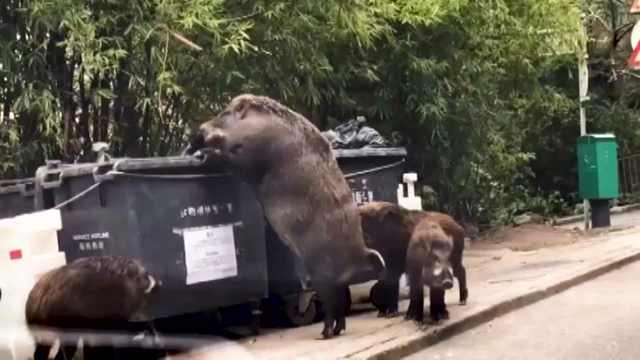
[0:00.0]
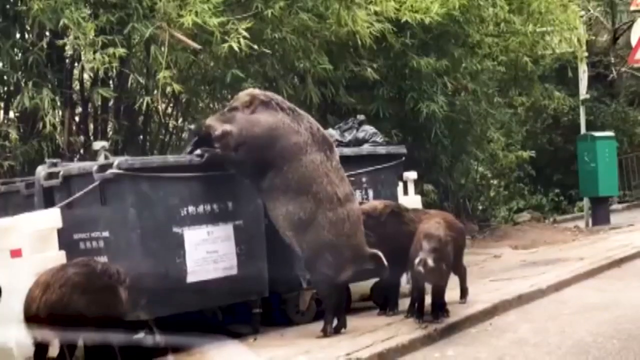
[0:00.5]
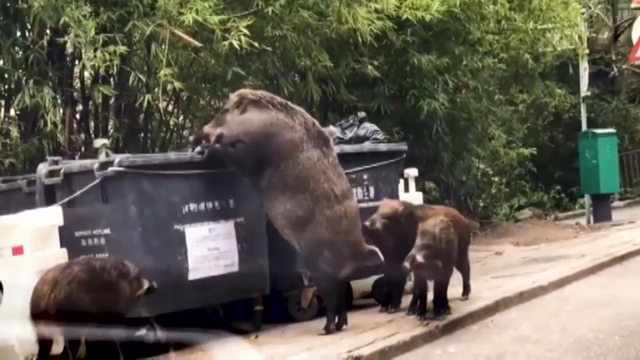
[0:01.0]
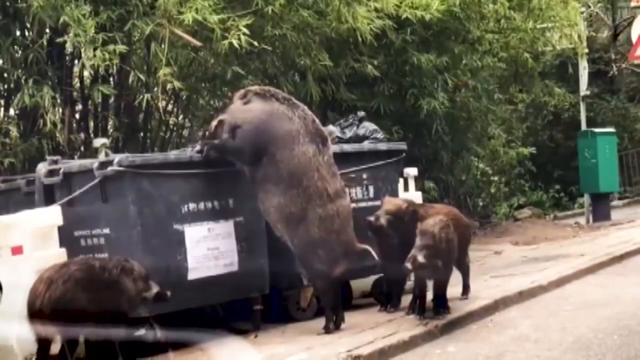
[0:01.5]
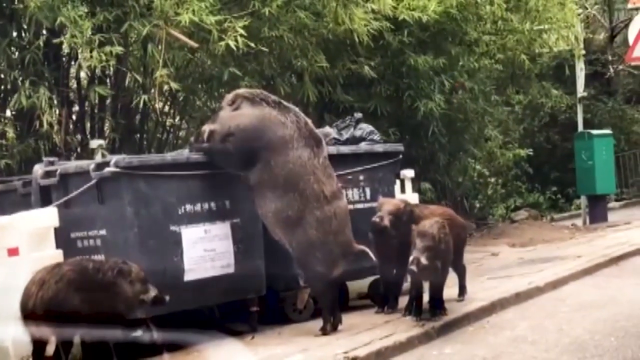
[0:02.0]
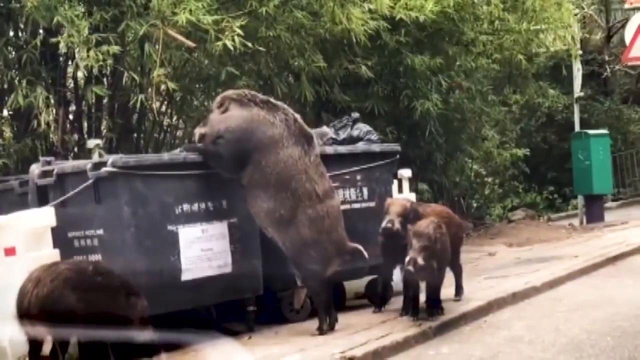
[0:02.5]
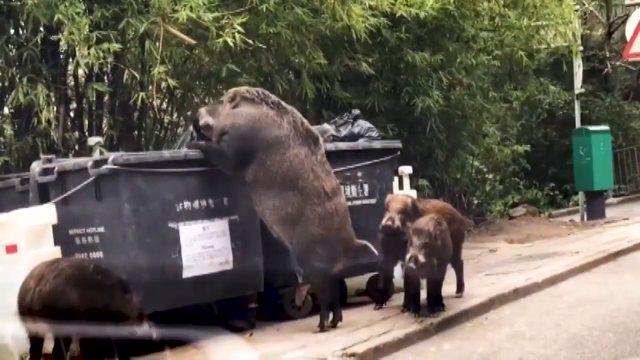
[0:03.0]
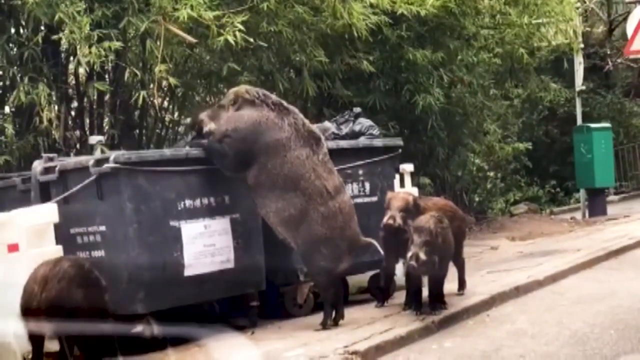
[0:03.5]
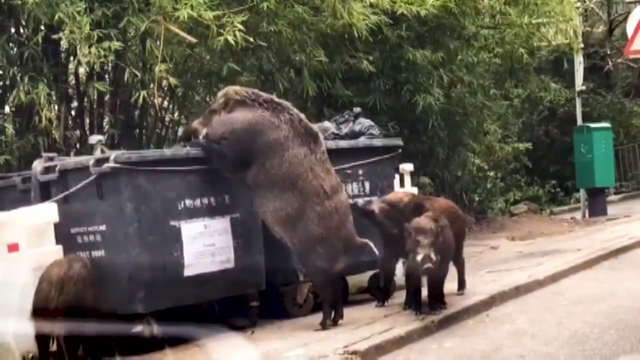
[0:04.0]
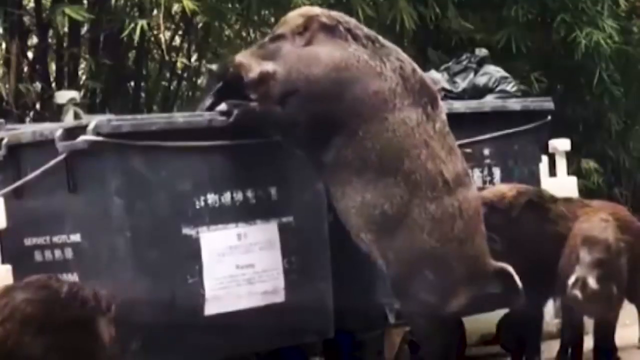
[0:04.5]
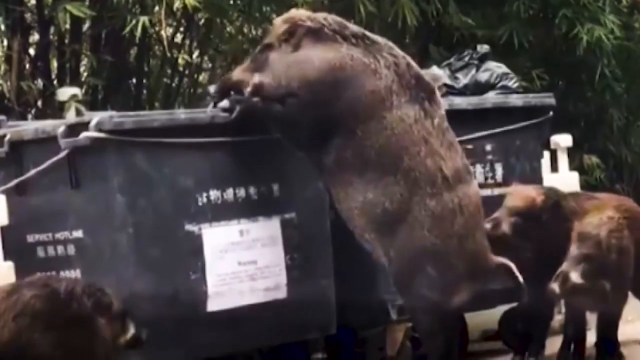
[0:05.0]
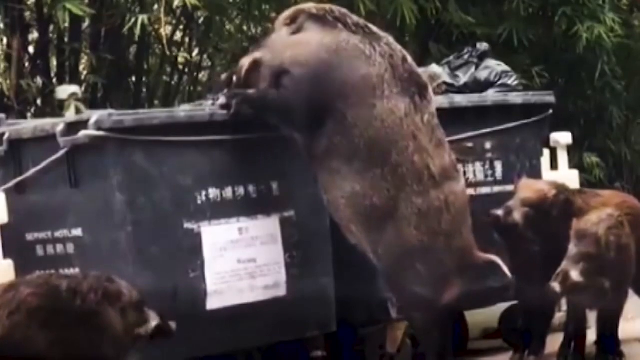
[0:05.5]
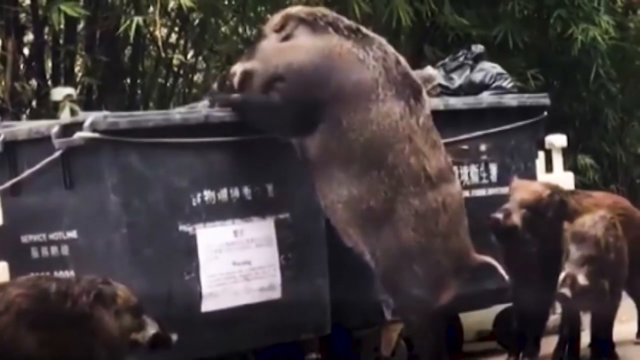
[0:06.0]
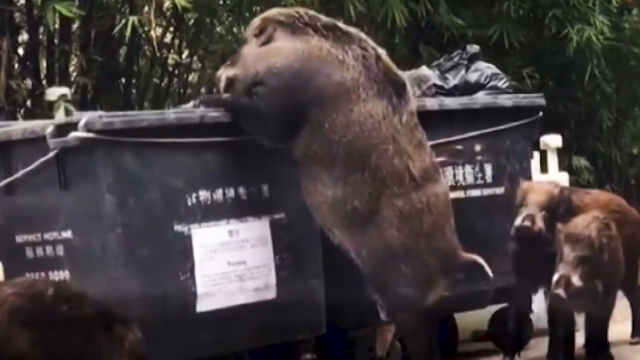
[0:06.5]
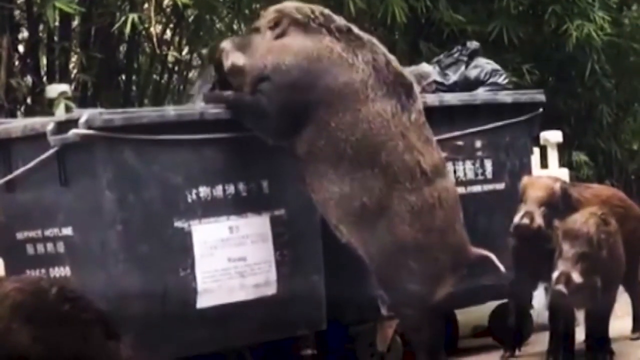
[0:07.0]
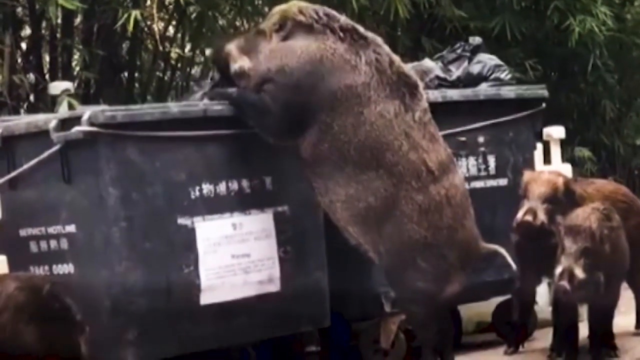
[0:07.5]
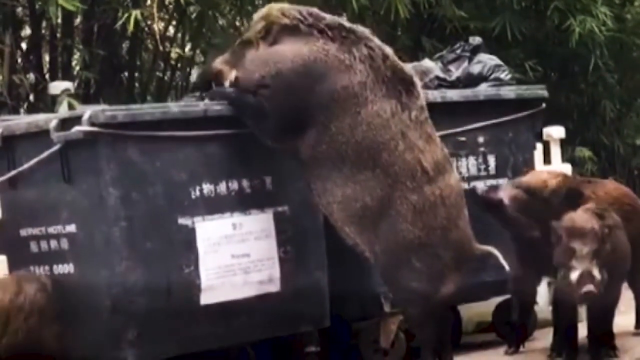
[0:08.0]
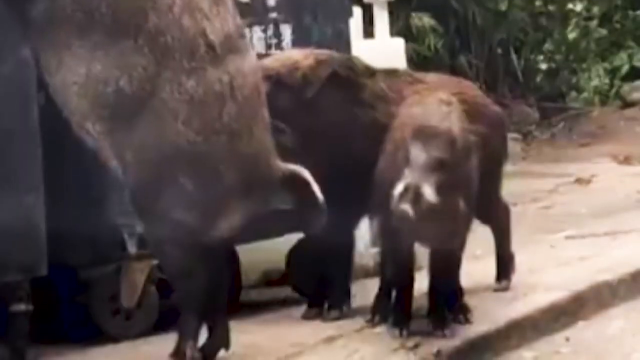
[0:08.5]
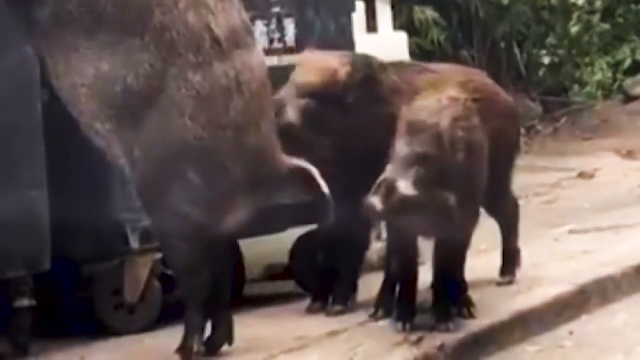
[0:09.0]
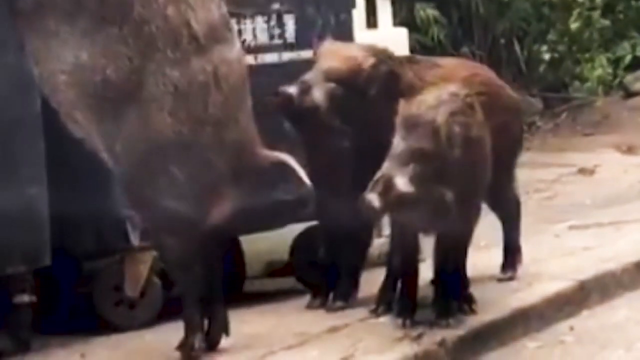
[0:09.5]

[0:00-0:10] Four animals are at two big dustbins, apparently looking for something. They are collecting things from the dustbins: one of them is collecting something, while the other three wait down below, watching. Behind them is green vegetation, and something green is also visible on the left and right sides. One animal is on a black dustbin trying to collect something, trying to open something inside a paper.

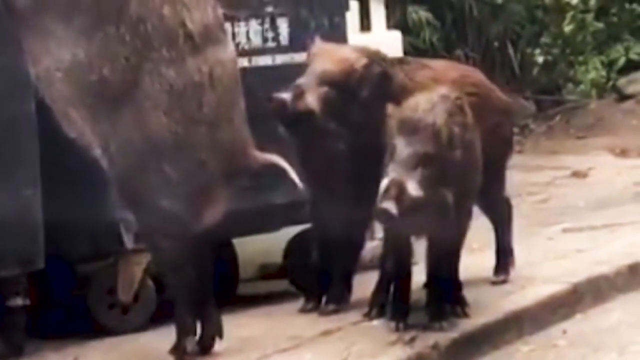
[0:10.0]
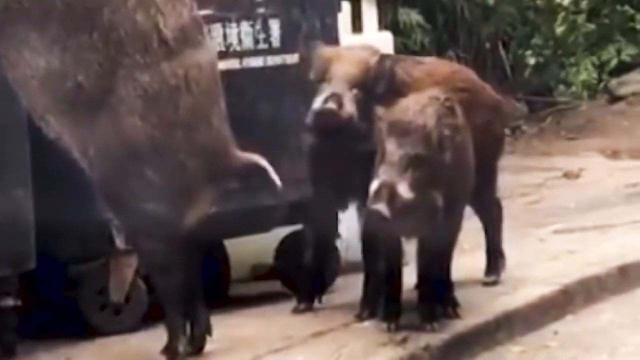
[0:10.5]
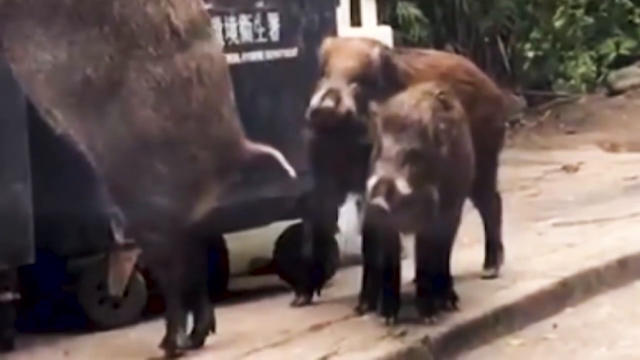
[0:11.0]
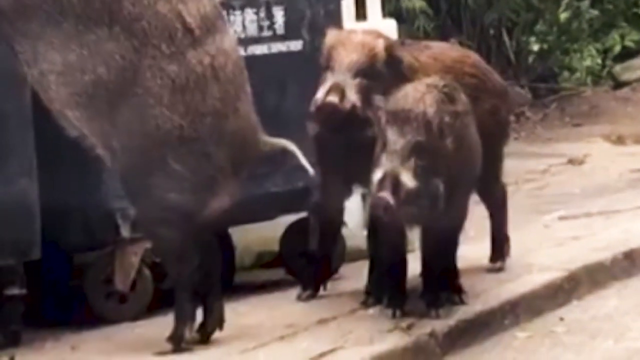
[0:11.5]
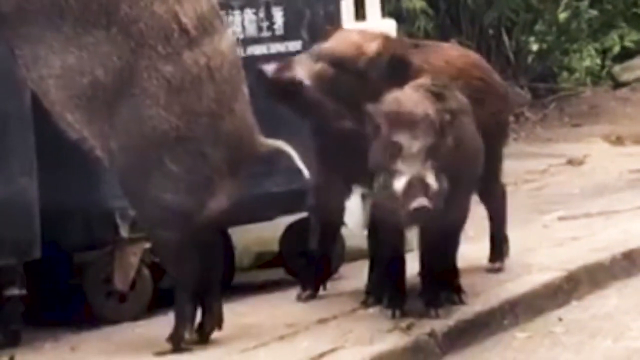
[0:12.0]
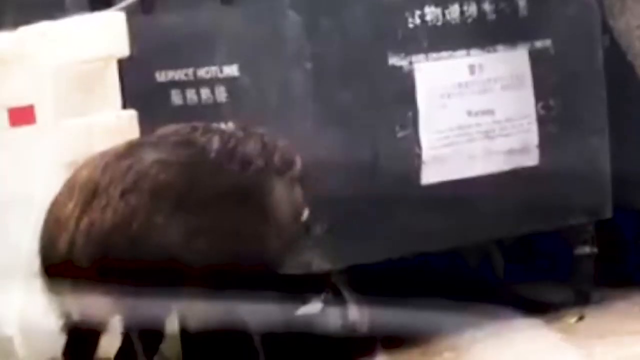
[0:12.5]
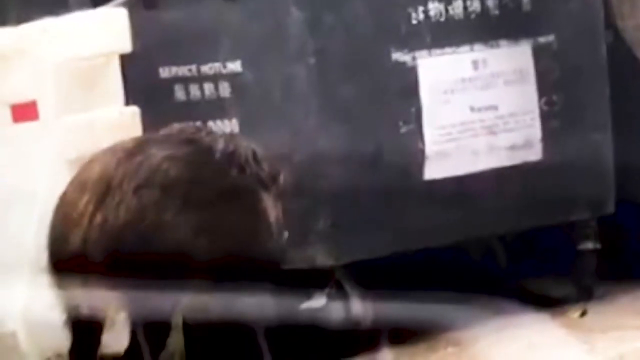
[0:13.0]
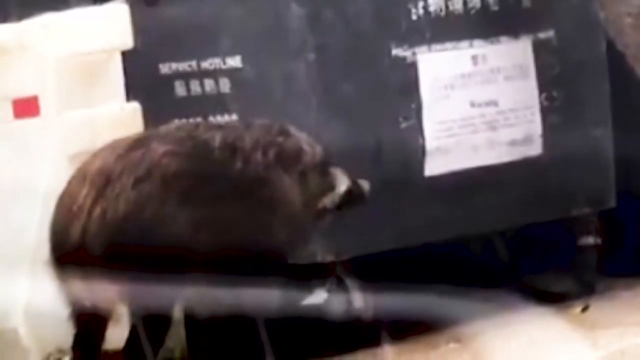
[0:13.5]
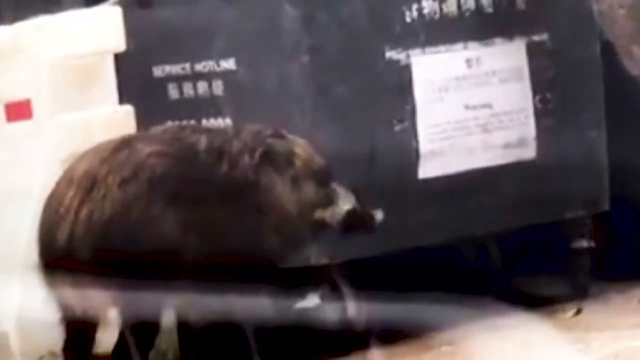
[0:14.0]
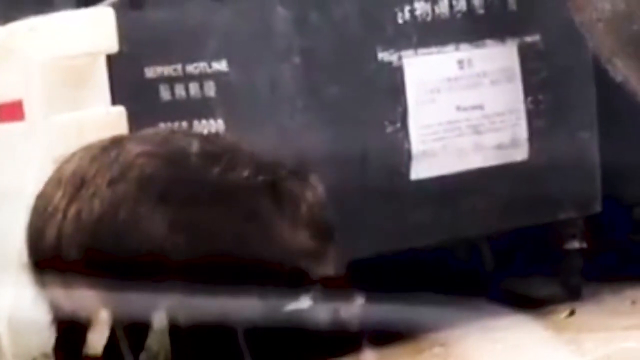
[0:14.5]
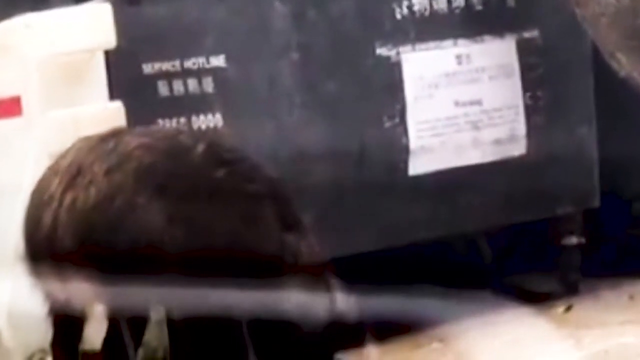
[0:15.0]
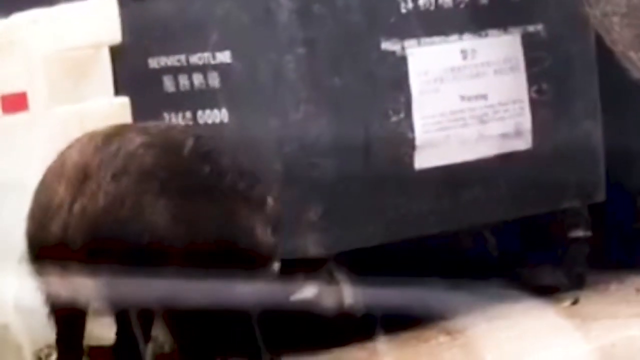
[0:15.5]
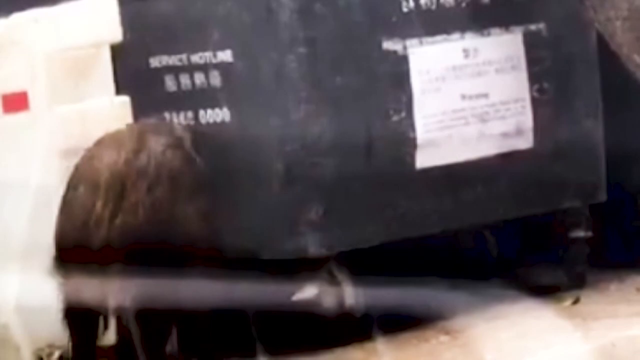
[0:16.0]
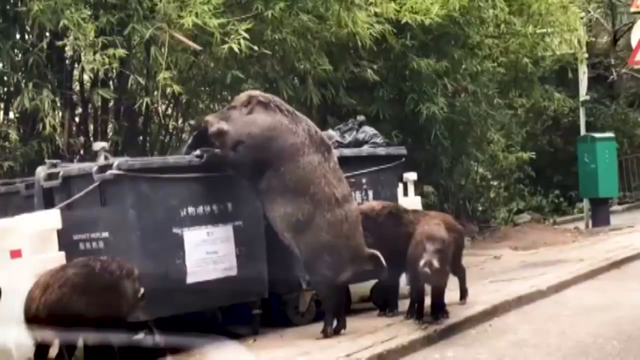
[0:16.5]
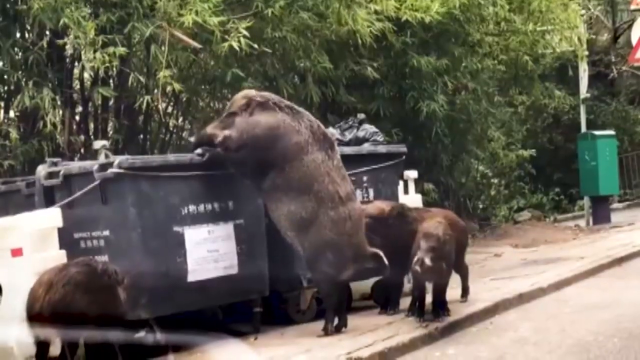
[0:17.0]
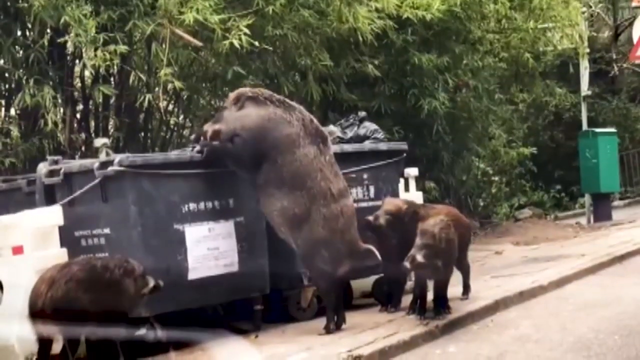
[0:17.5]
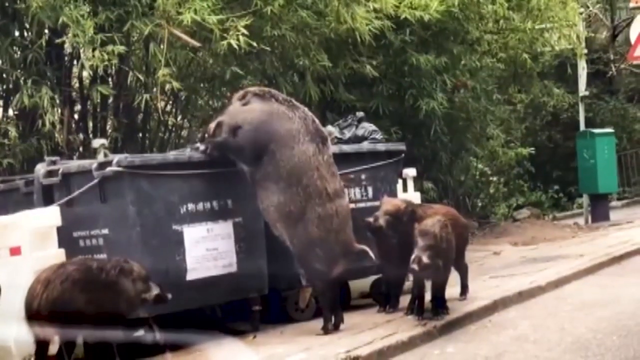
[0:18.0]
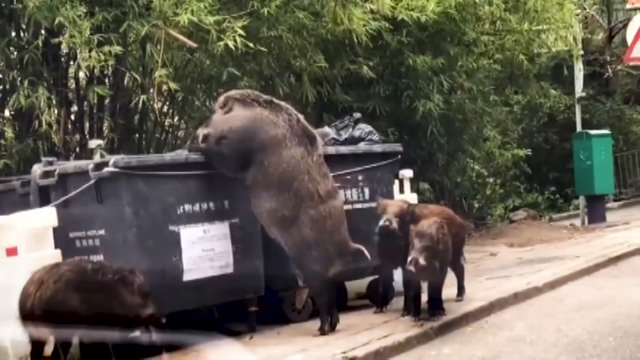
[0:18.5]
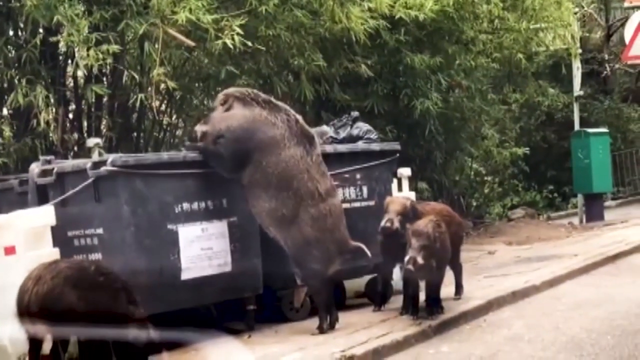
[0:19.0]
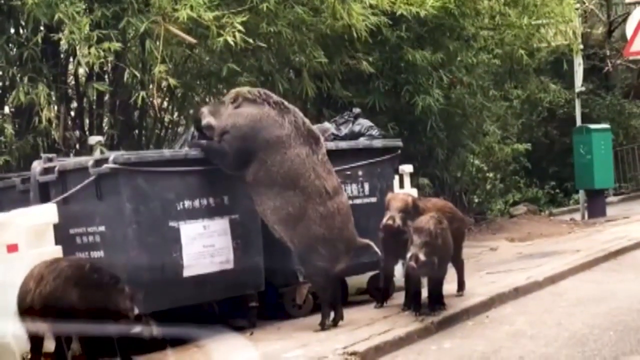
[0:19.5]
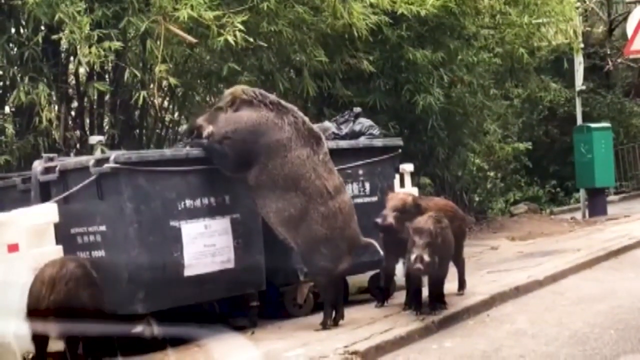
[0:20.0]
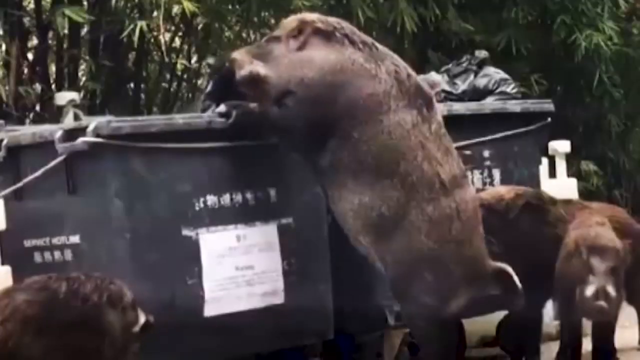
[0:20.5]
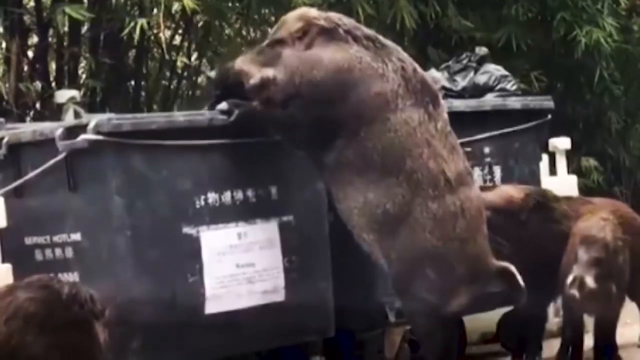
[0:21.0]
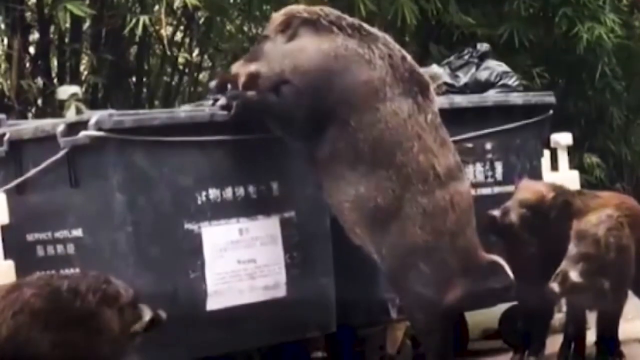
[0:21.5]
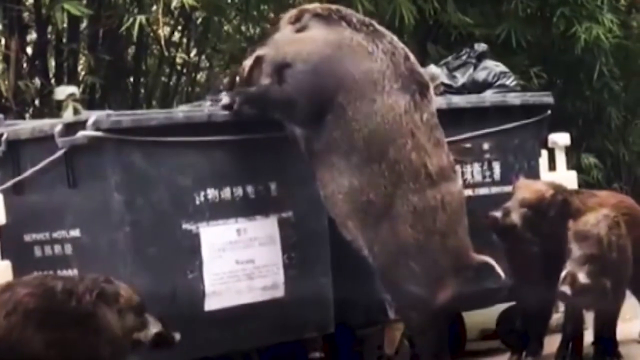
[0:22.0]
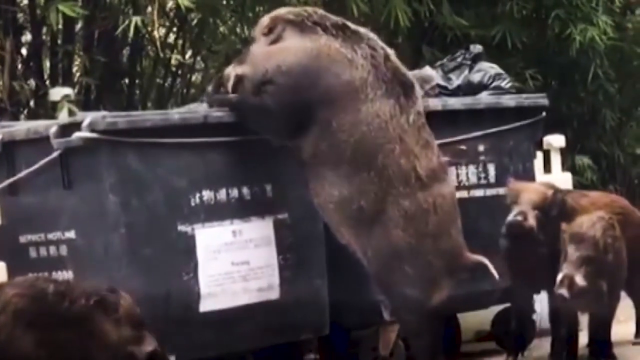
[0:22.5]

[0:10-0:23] Animals are on a big dustbin, trying to get something. One is trying to remove something from inside a paper. A dog is seen. There are four animals: the big one is trying to get something from the black dustbin, while the others wait down below for it. Behind them is a green environment with green trees. Two big dustbins are visible, and the animals are on one of them, where one animal is trying to remove something out of a paper.